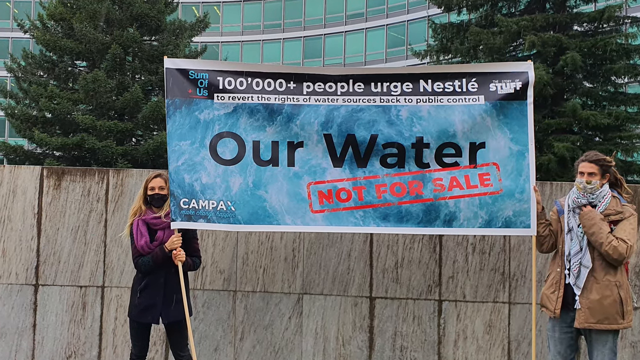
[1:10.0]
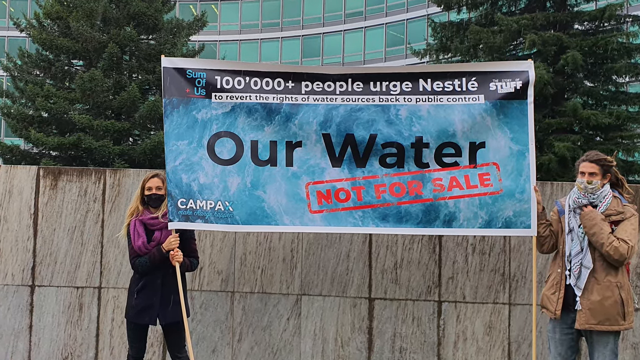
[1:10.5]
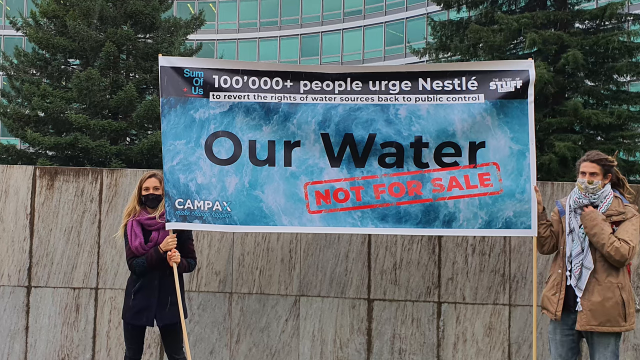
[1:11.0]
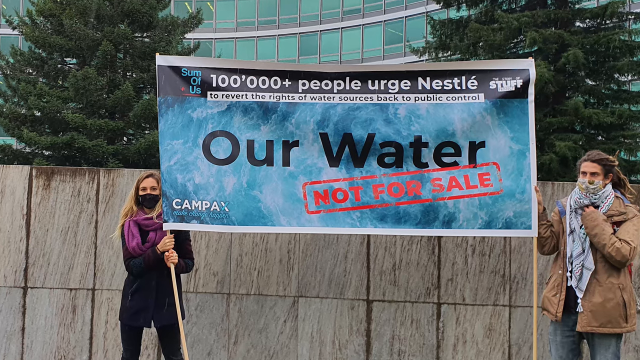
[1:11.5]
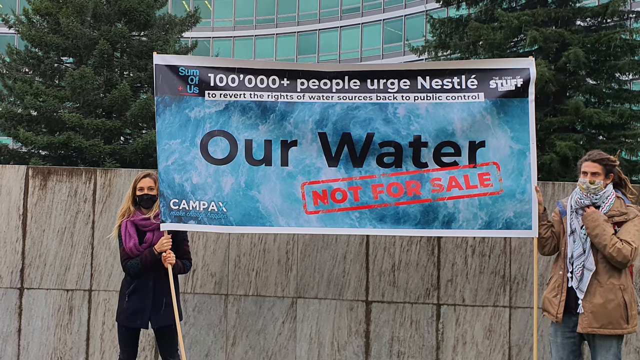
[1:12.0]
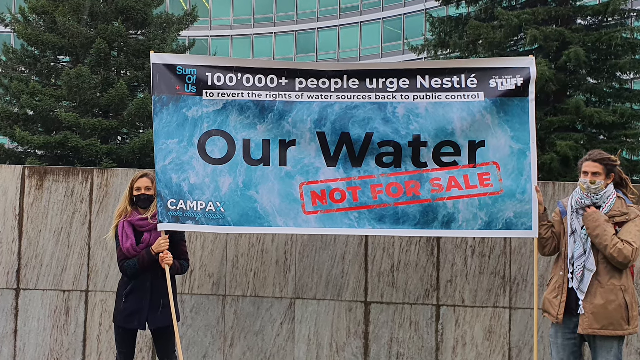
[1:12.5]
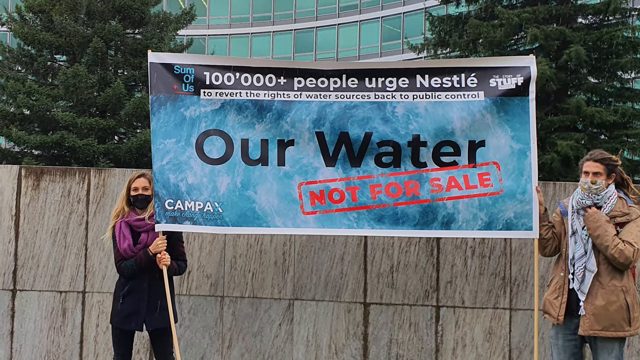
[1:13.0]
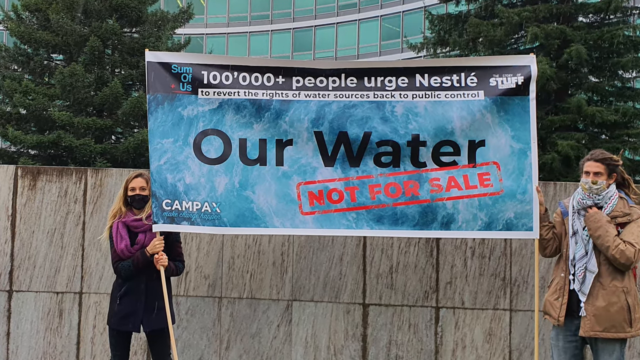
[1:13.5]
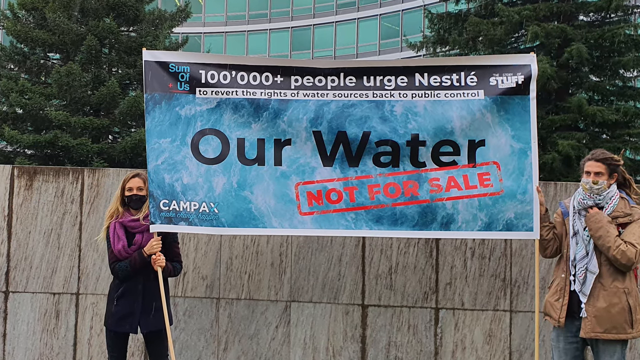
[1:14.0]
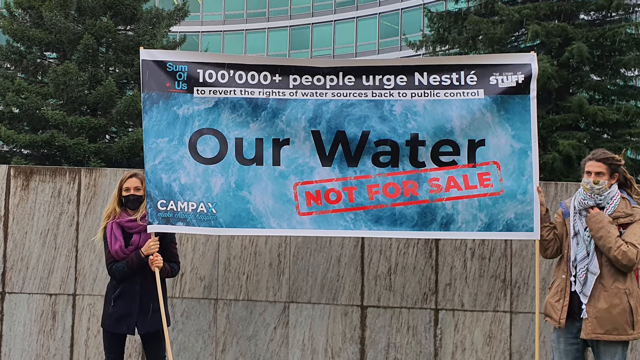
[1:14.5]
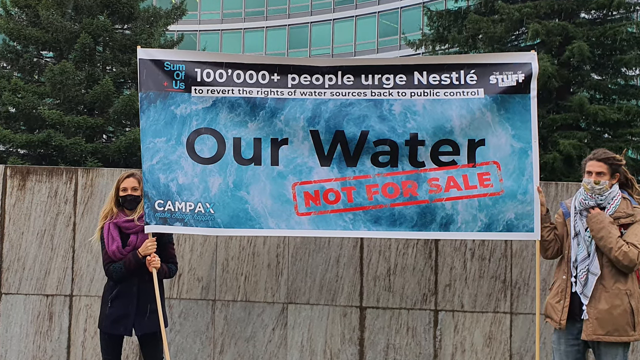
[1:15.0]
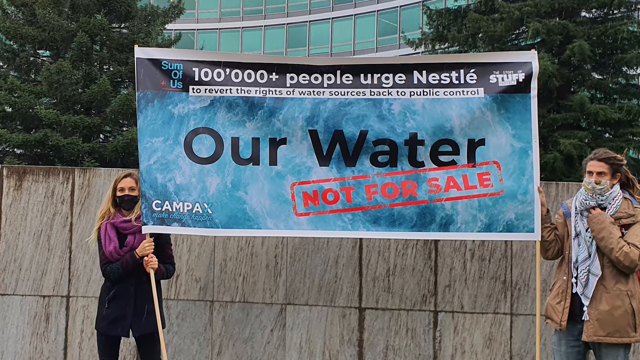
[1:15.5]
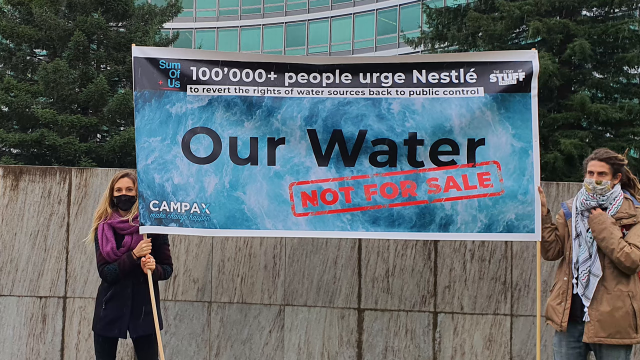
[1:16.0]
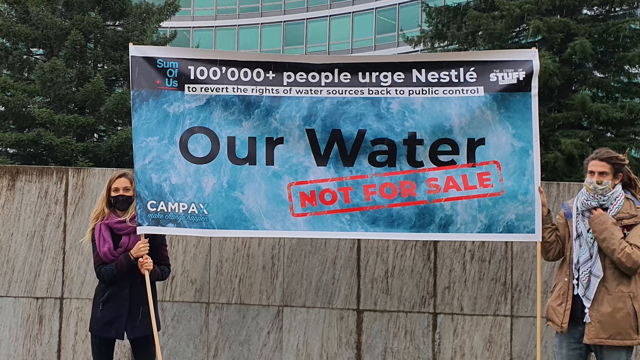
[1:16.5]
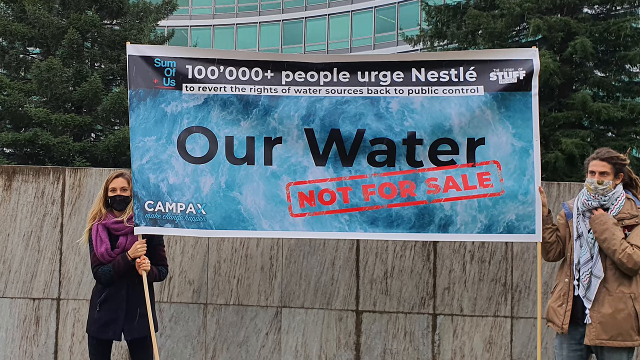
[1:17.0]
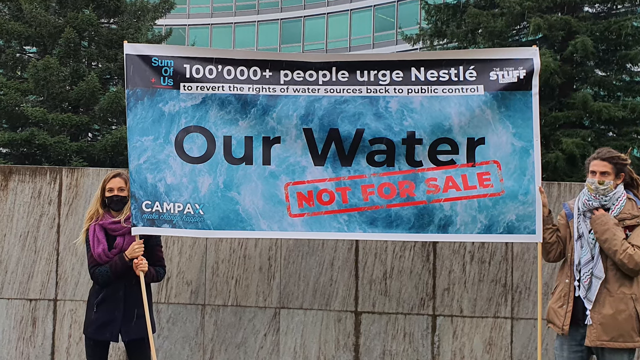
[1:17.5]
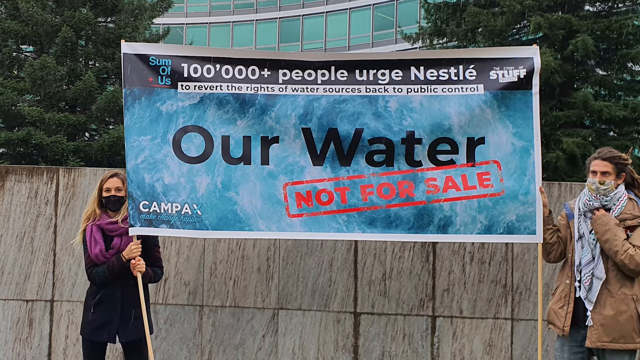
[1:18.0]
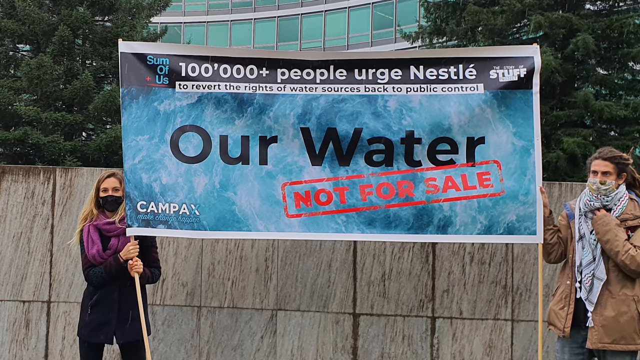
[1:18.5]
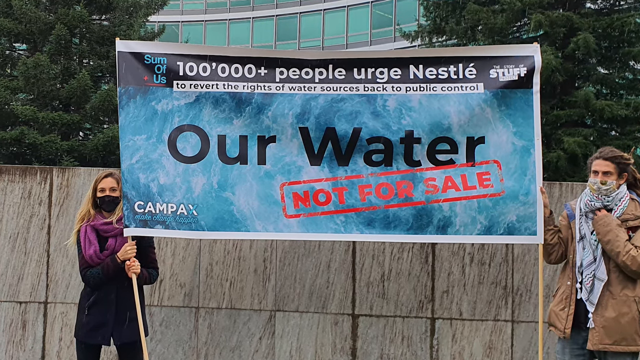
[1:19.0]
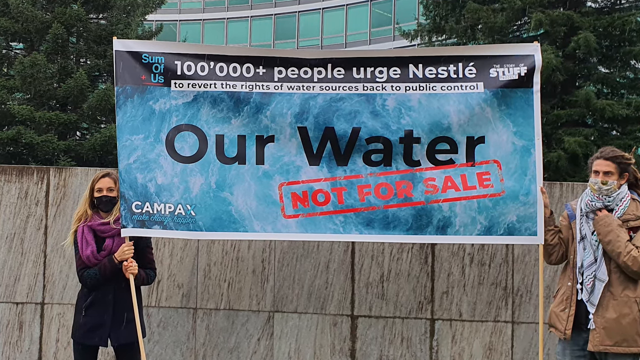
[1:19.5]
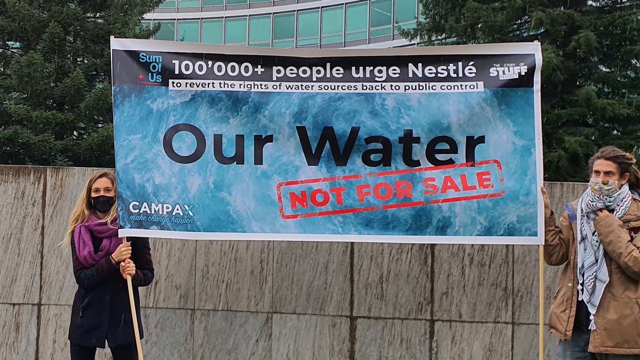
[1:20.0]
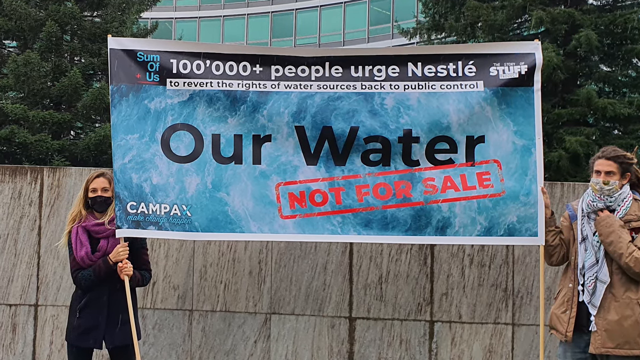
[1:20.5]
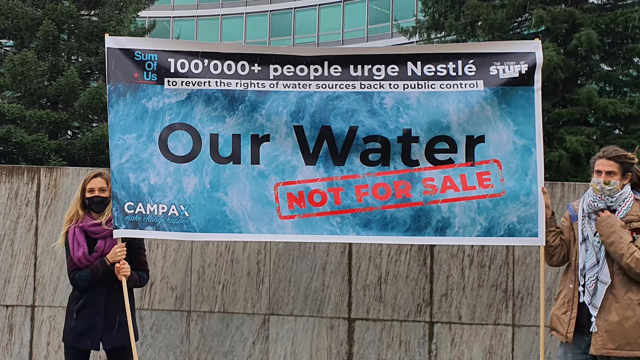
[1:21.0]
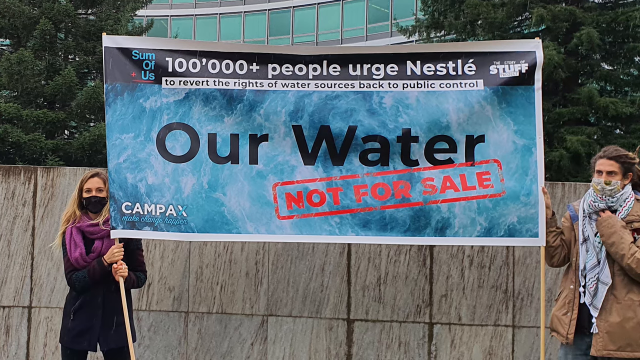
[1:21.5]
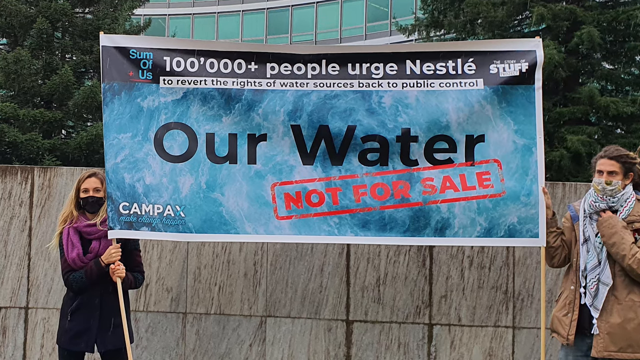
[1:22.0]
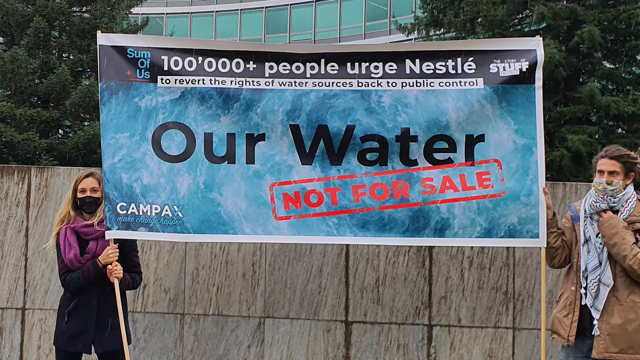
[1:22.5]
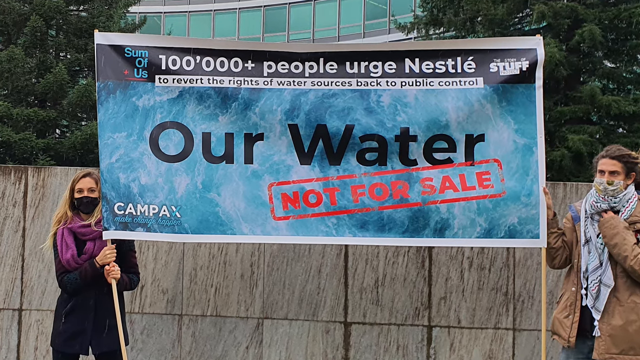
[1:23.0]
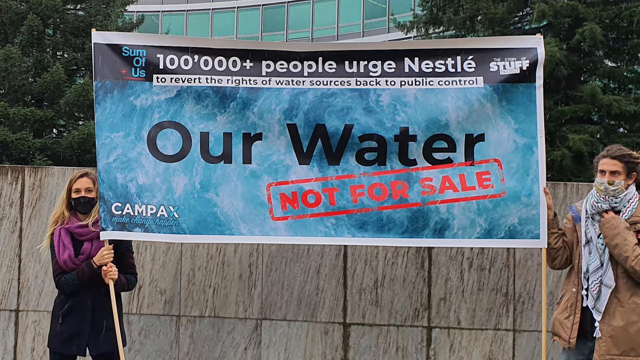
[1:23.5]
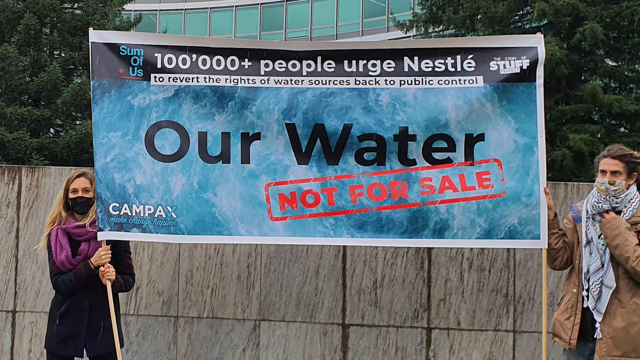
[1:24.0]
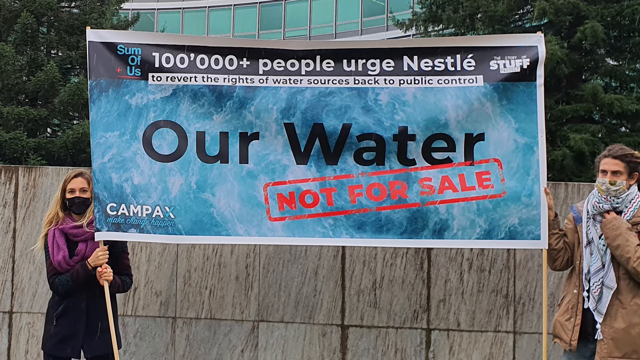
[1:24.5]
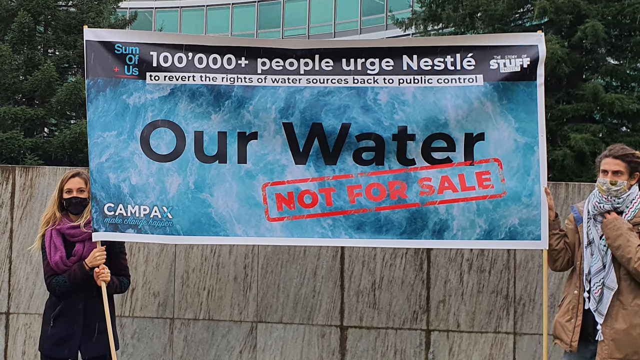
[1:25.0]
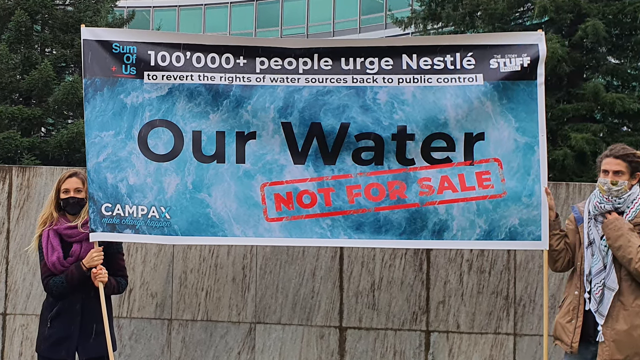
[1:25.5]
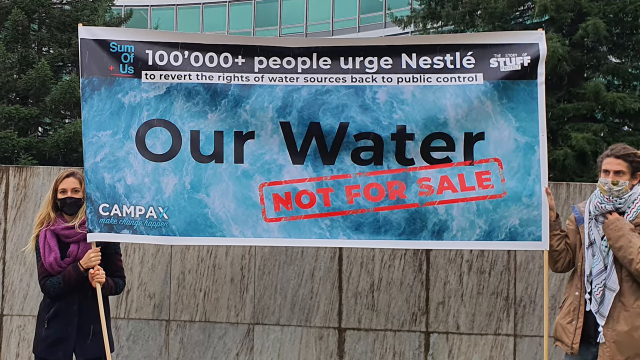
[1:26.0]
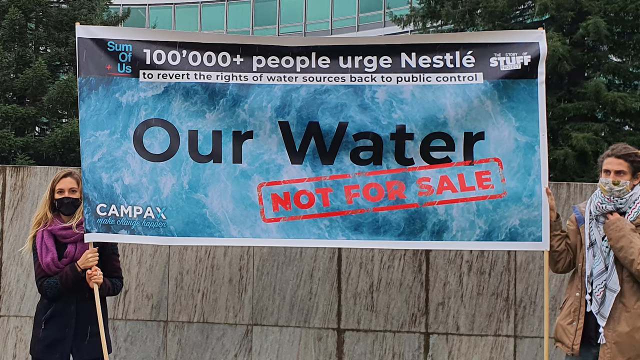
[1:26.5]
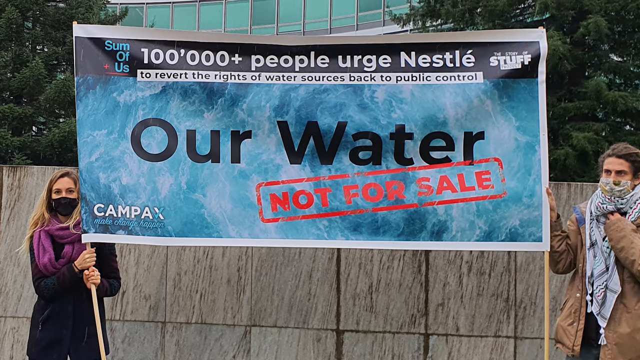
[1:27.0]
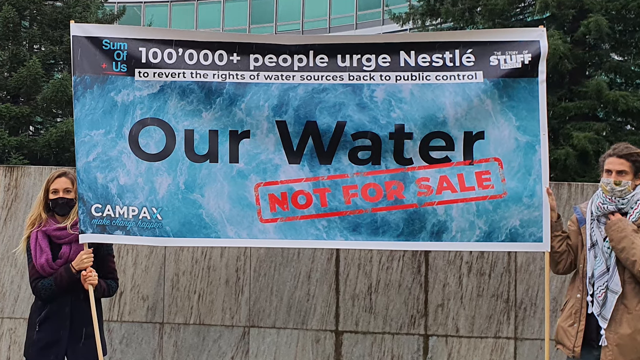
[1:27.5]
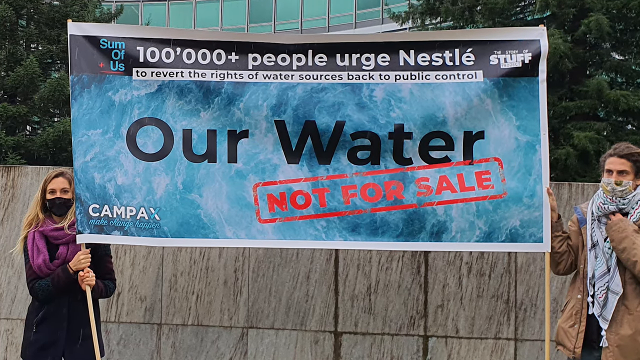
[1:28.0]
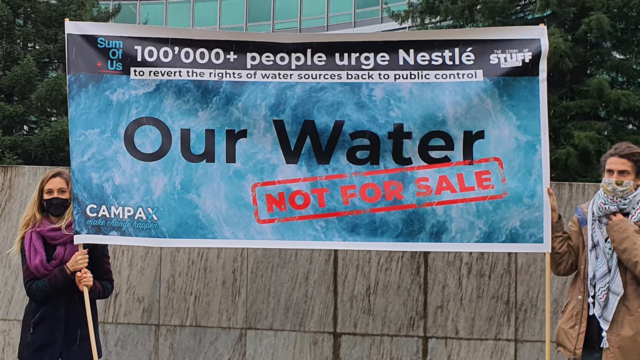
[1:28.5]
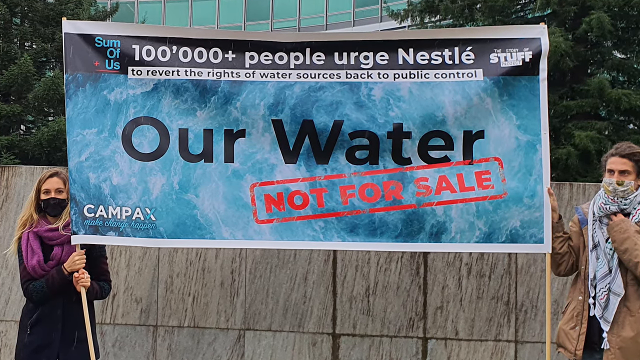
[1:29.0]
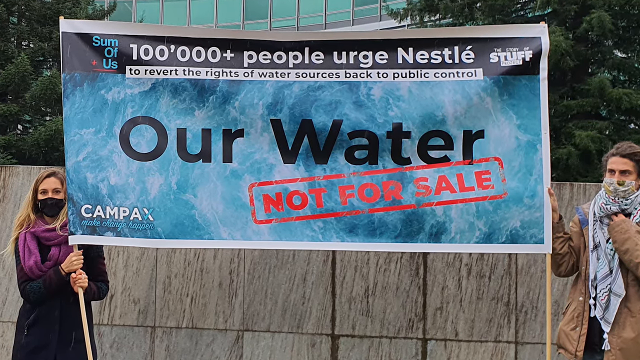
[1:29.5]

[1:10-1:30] The two people continue holding the big sign, which is bigger than they are. At the top it says "a hundred thousand plus people urge Nestle to revert the rights of water sources back to public control"; in the middle "our water" appears in black letters with an image of water, and "not for sale" is in red, surrounded by a red rectangle. The video is from Campex. The person on the left wears a black jacket, a purple scarf and a black mask; the person on the right wears jeans and a light brown coat, with their face somewhat covered by scarves. In close-up, they slowly move forward with the sign. The sign and the people are in front of a wall made of several rectangles, with a tree on the left and a tree behind; the trees are behind the wall. The wall reaches the height of the person on the left, while the person on the right is taller. The building behind is rounded, higher up and somewhat of a semicircle, not straight lines.